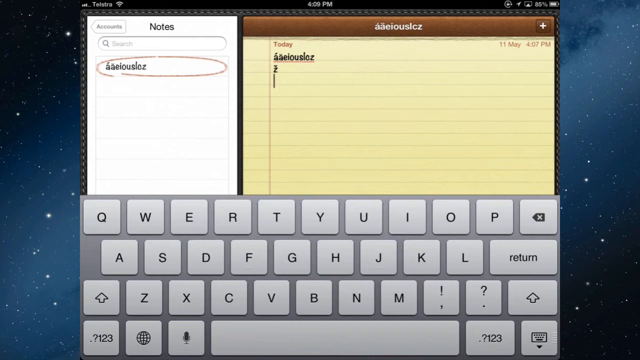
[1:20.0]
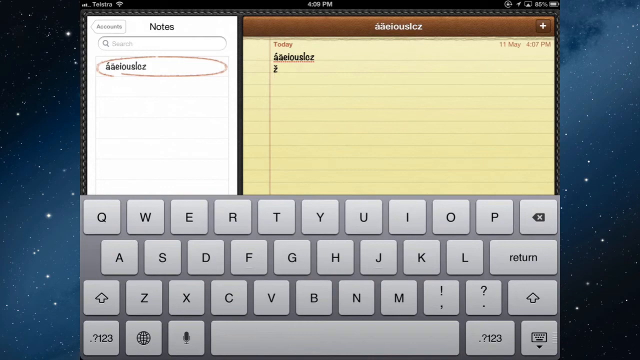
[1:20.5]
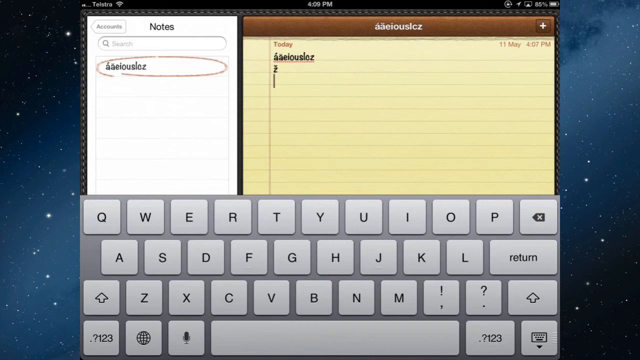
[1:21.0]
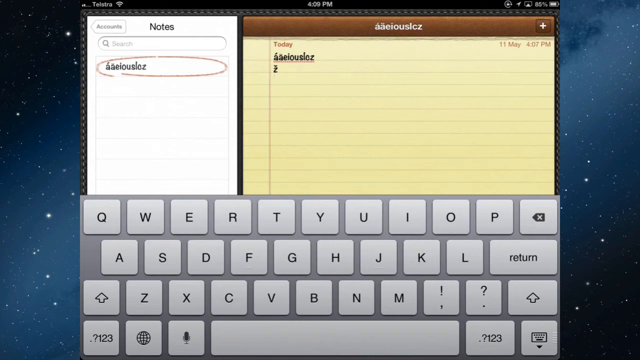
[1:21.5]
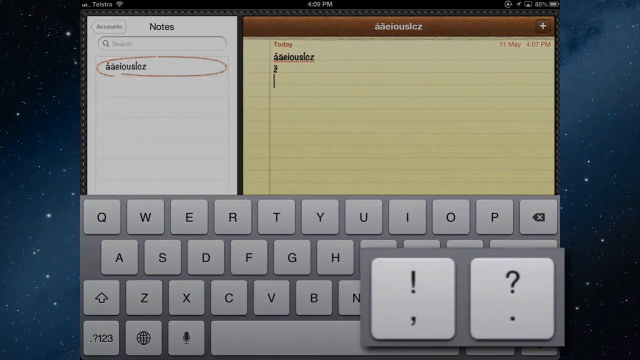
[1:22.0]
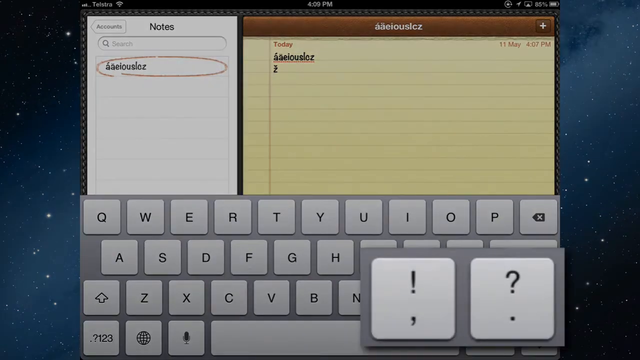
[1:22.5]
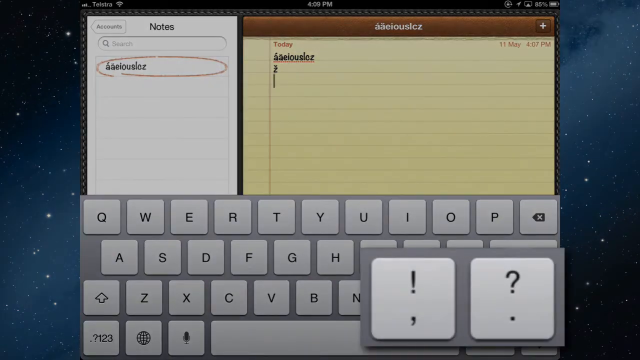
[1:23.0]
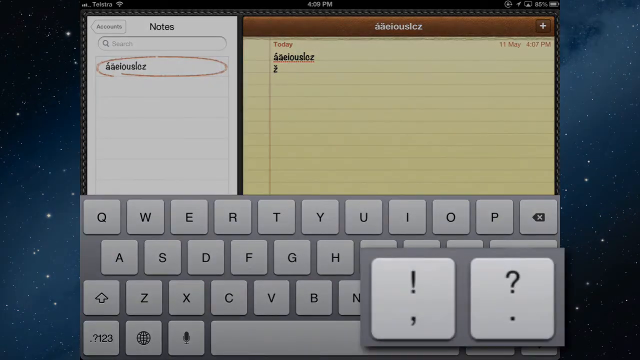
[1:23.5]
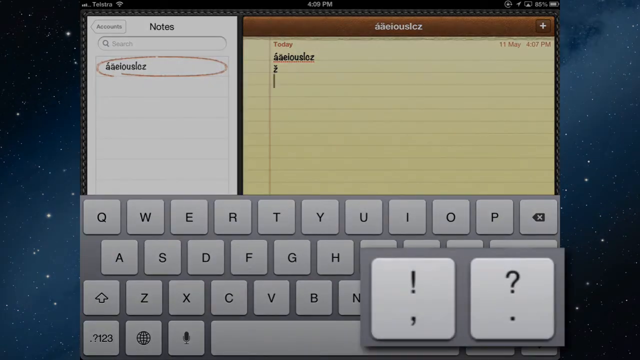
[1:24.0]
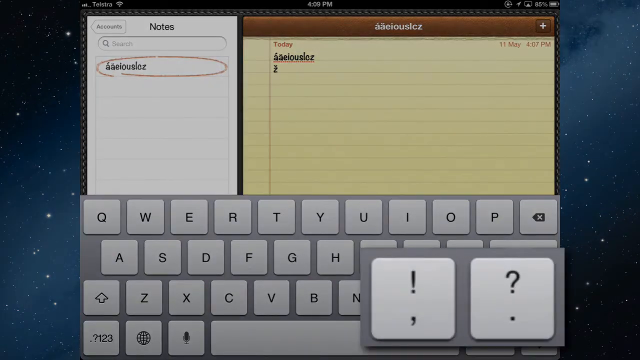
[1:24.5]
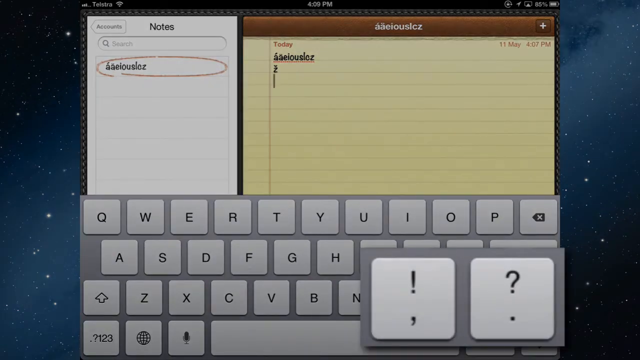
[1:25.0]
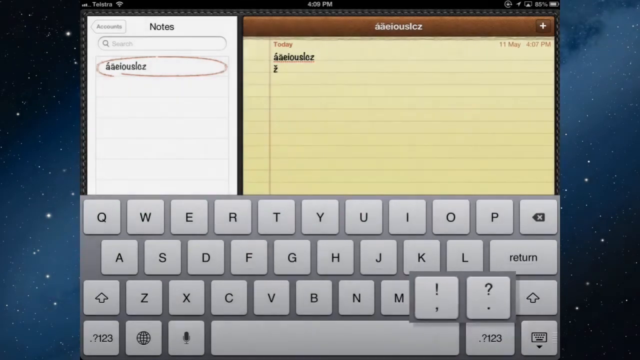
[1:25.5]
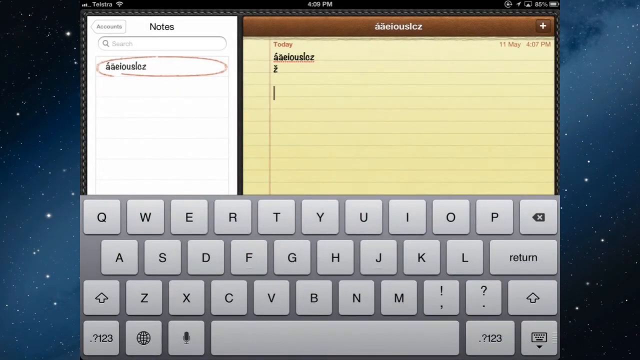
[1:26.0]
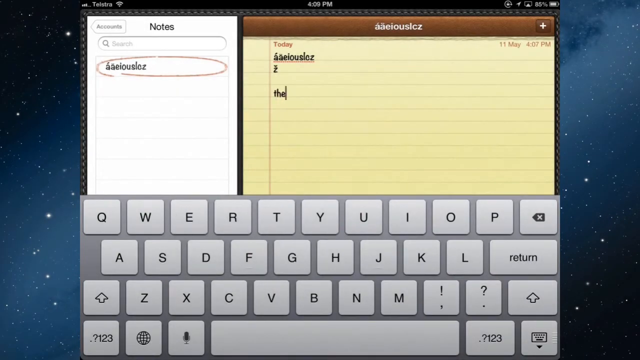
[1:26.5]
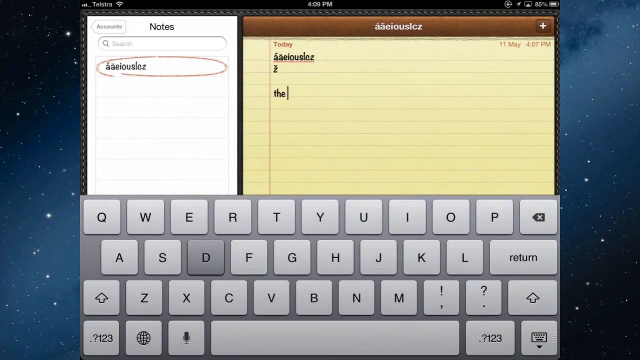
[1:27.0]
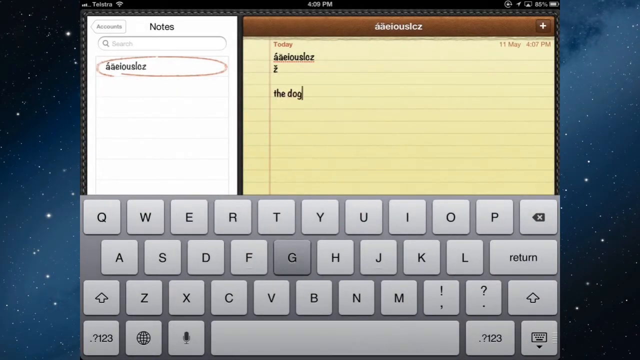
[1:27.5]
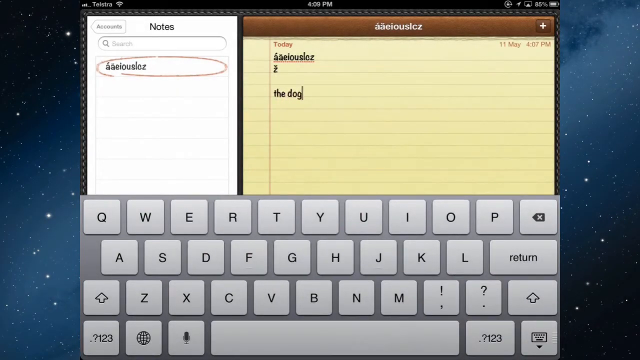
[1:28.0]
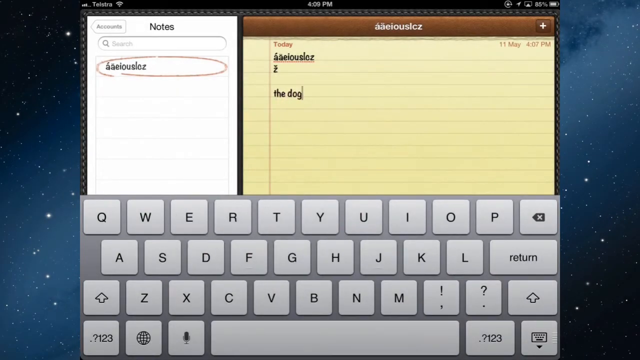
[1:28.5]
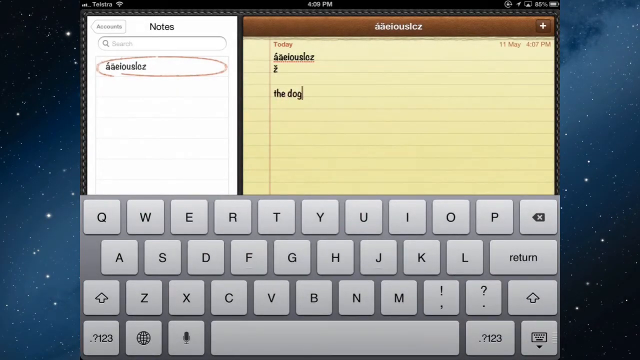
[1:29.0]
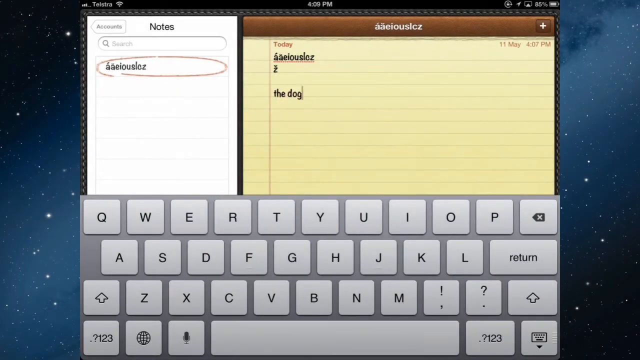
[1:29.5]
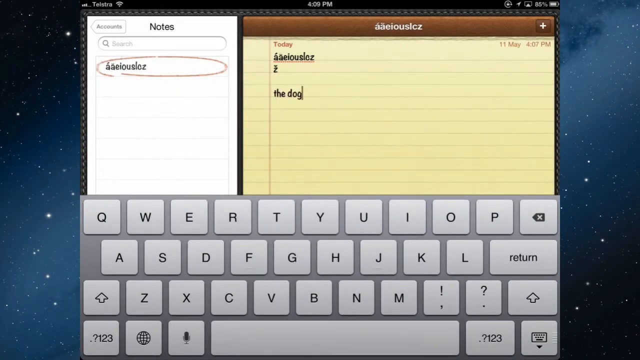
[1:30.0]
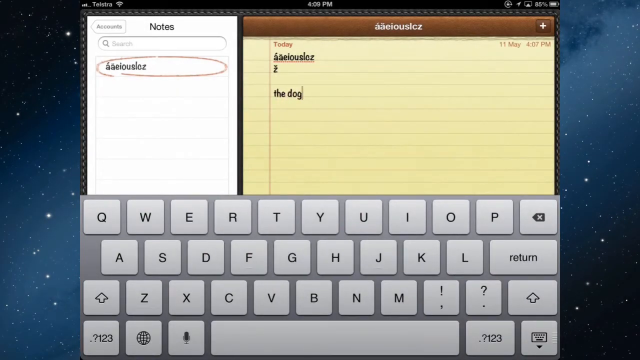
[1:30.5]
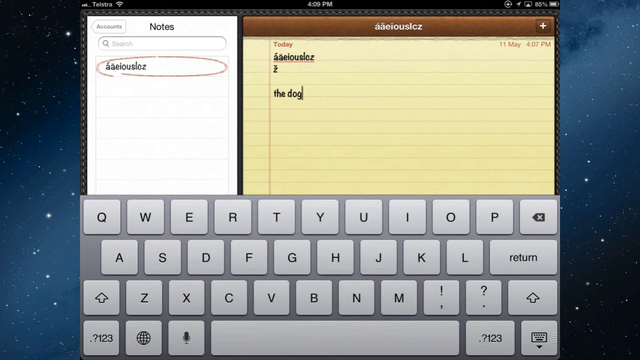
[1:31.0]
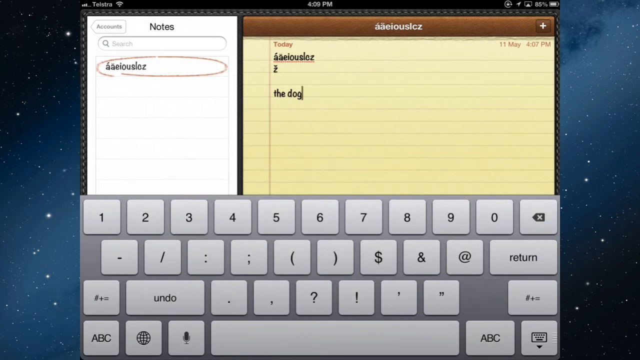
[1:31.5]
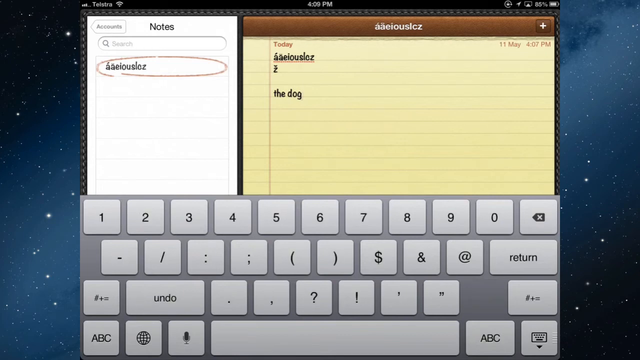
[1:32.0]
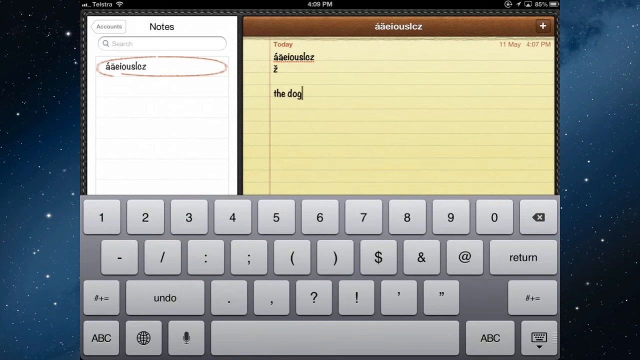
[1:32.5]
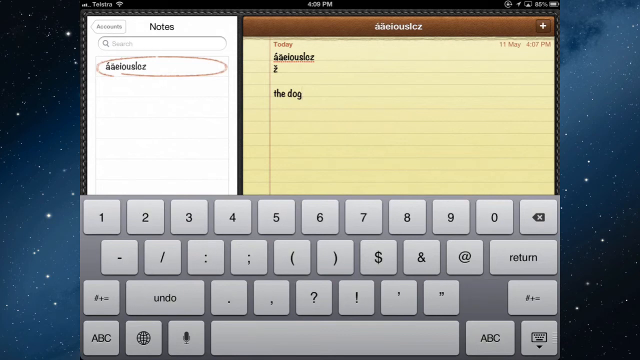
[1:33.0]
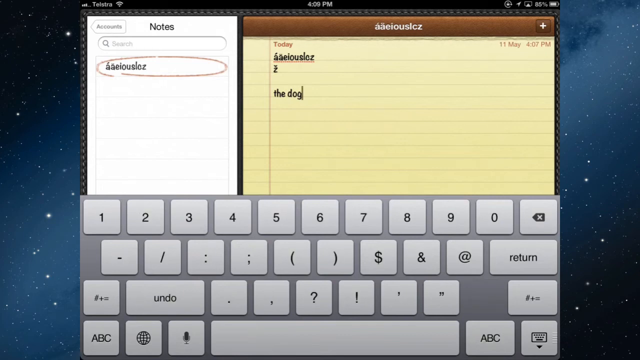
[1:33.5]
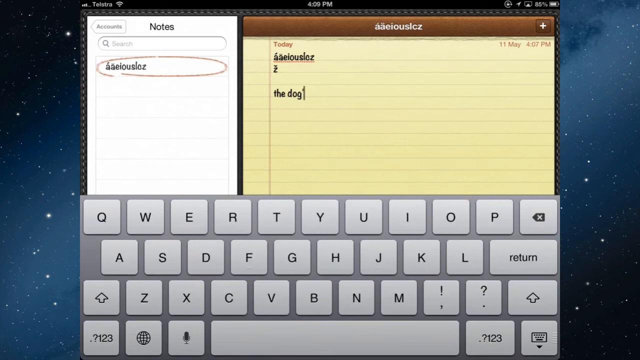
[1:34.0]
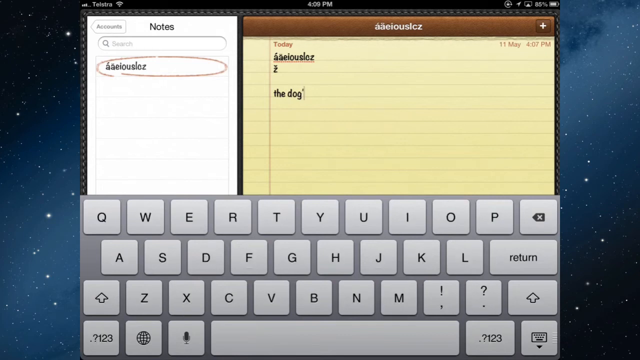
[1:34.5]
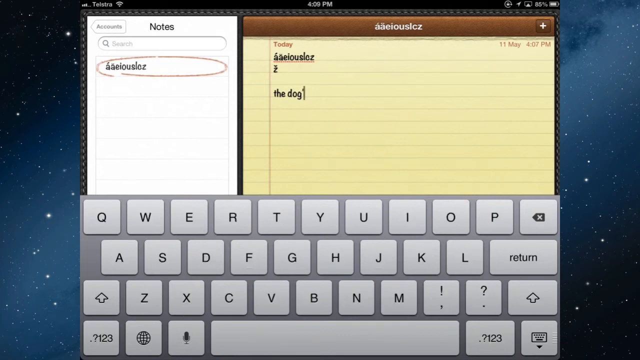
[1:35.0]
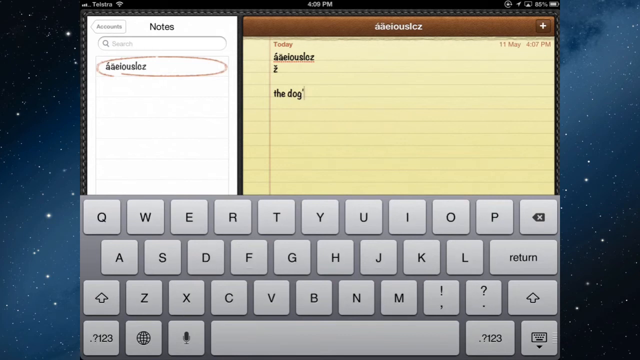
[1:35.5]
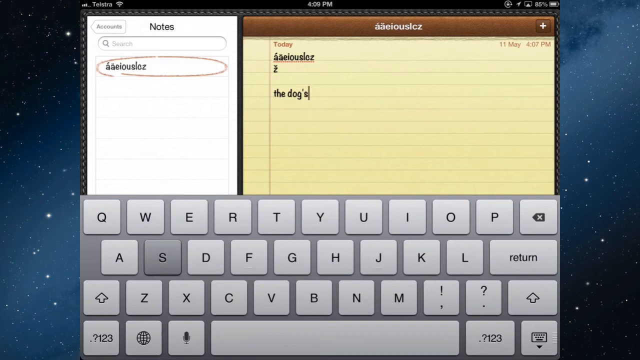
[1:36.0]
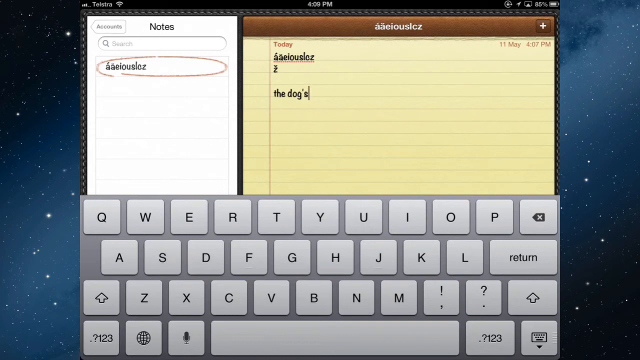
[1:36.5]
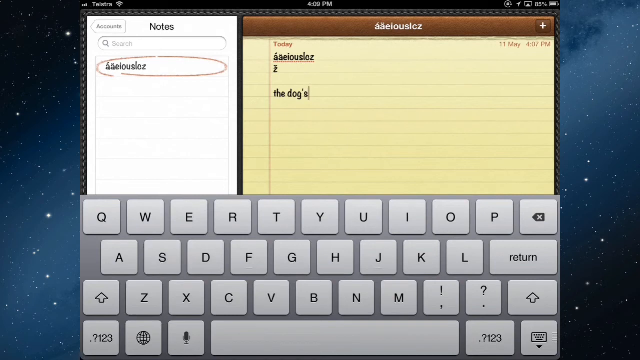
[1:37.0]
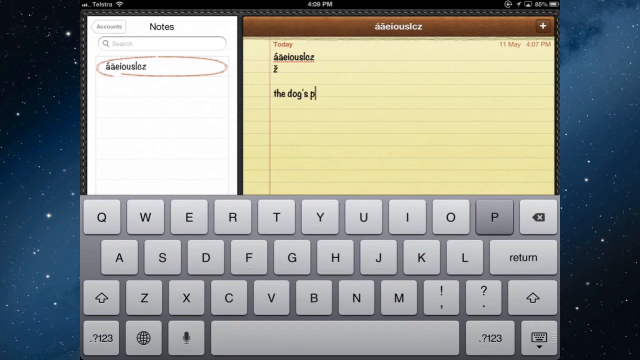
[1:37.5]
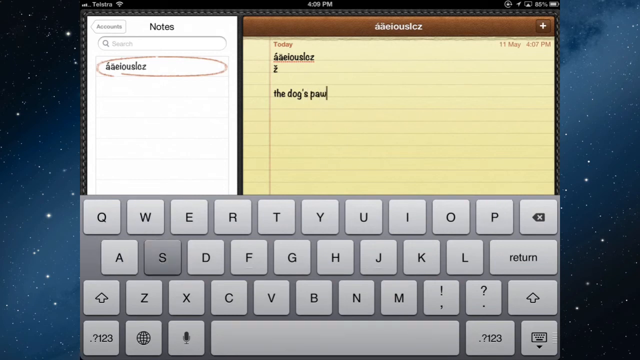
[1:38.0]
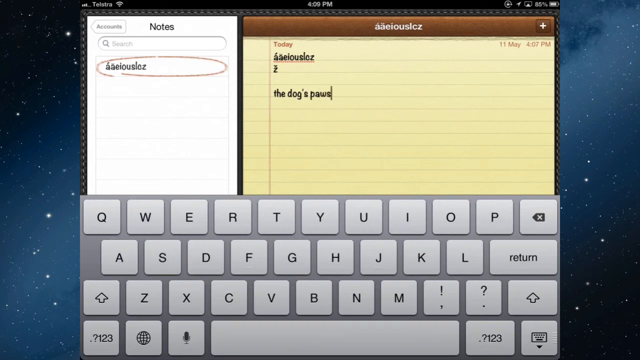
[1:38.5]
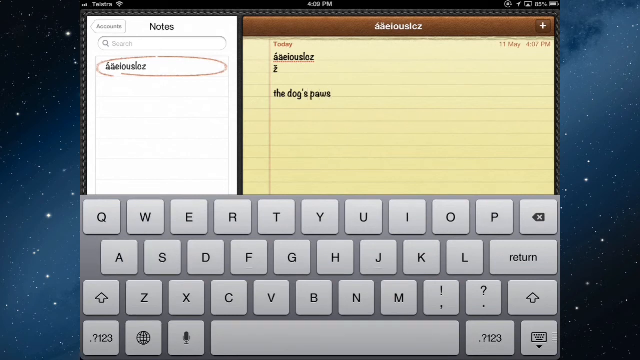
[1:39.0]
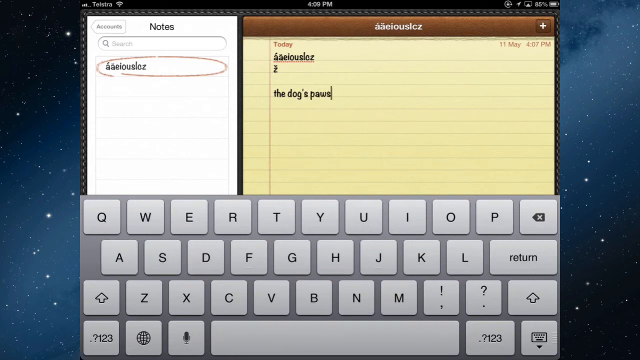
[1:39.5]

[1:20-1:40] A computer-generated notepad with yellow pages is shown; its brown top border has white text on it. On the left side is another, much smaller notepad with white pages, and below is a gray keyboard. The user seems to select something on the keyboard that enlarges the keys with the exclamation point and the question mark. Text is written on the yellow notepad reading "the dog." The keyboard changes from letters to numbers and symbols, the user continues typing, and the text now reads "the dog's paws," apparently typed on the fourth line of the notepad. At the top of the notepad is brown text reading "today," and at the top right are the date and time.